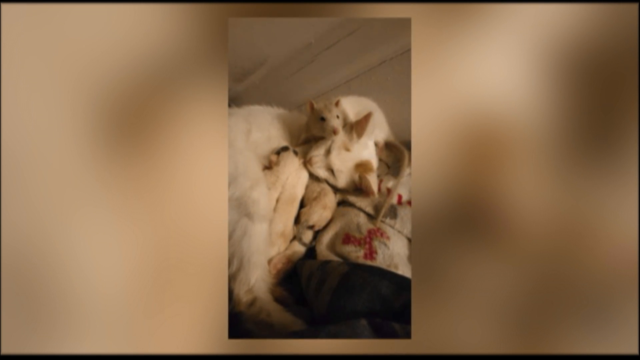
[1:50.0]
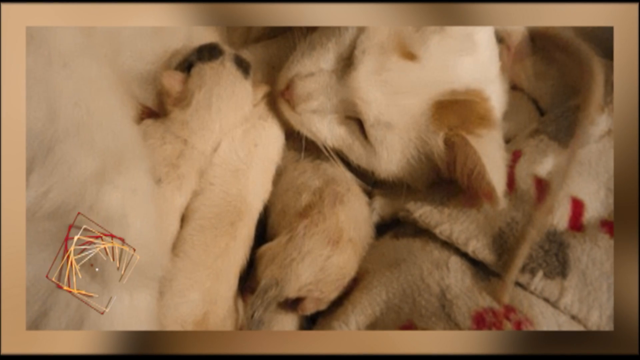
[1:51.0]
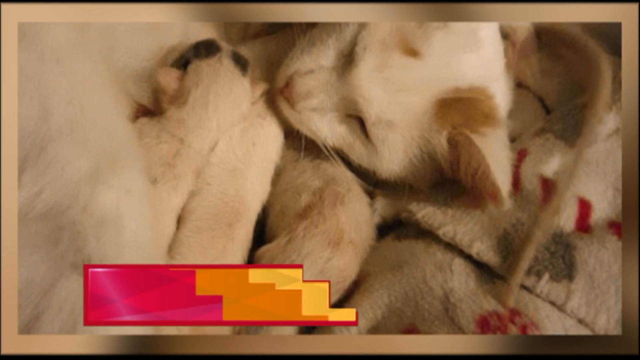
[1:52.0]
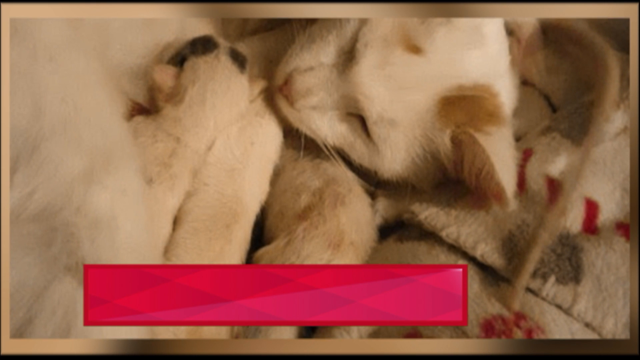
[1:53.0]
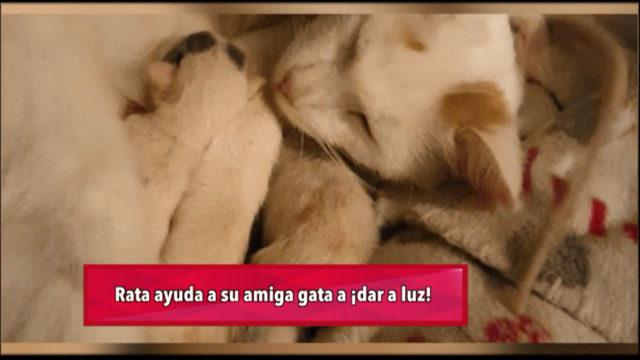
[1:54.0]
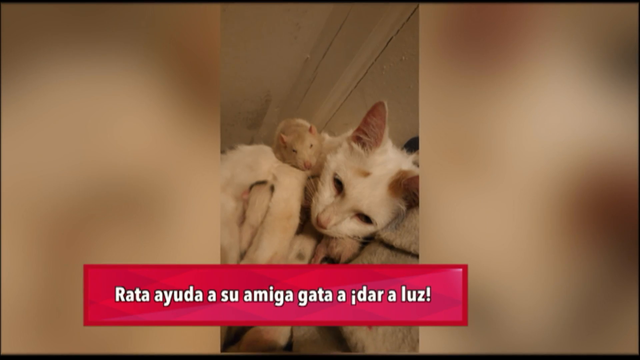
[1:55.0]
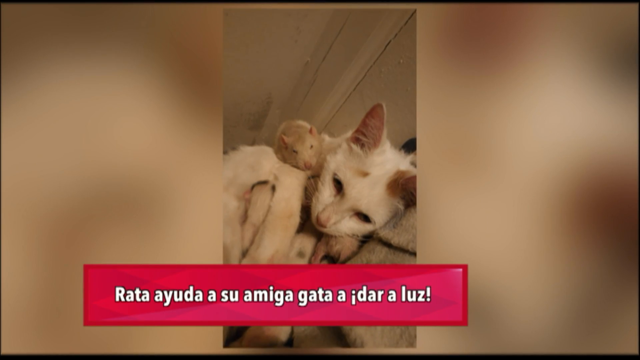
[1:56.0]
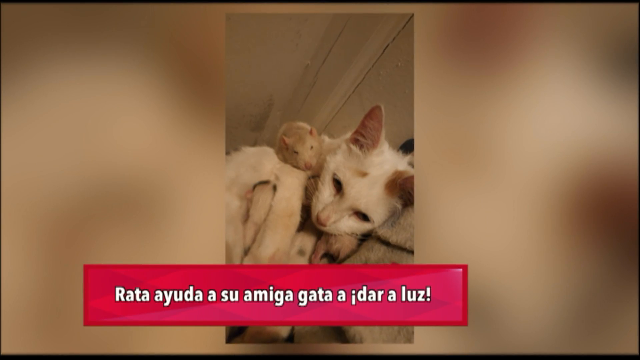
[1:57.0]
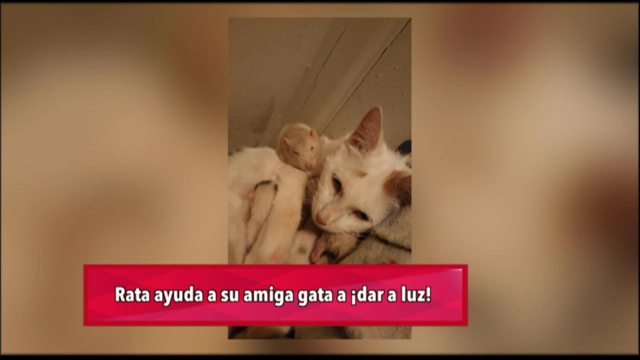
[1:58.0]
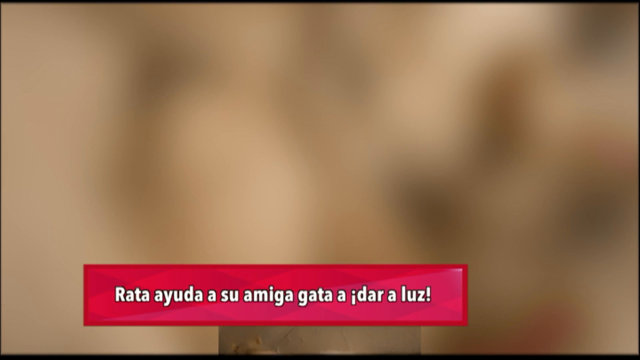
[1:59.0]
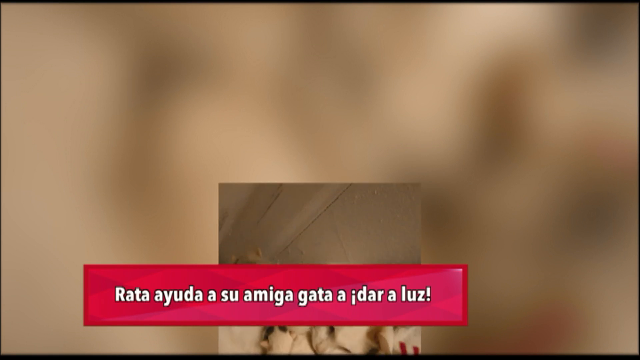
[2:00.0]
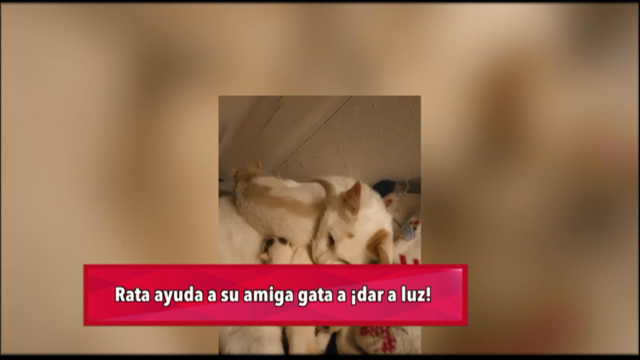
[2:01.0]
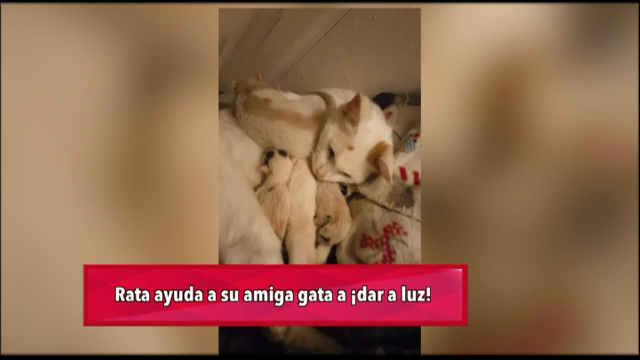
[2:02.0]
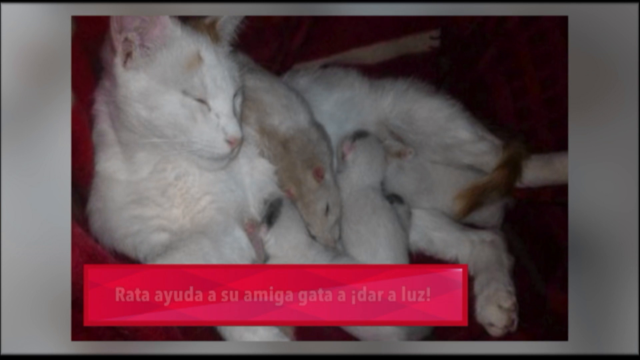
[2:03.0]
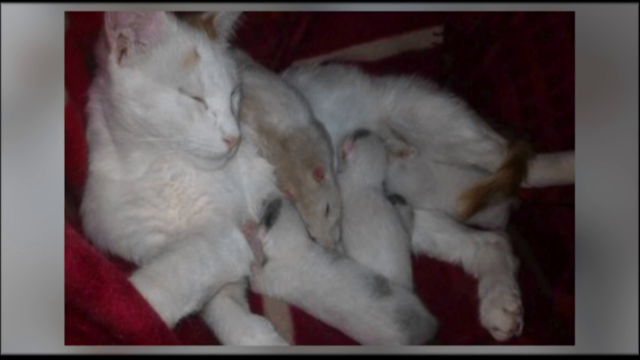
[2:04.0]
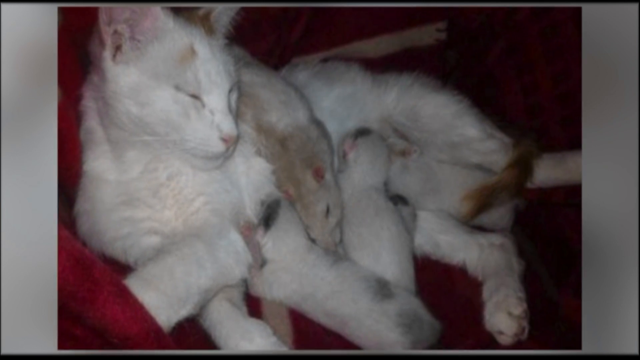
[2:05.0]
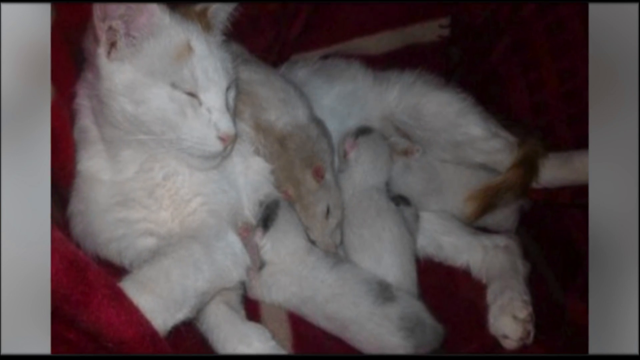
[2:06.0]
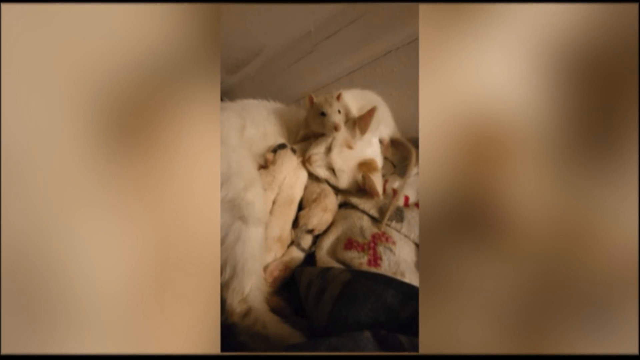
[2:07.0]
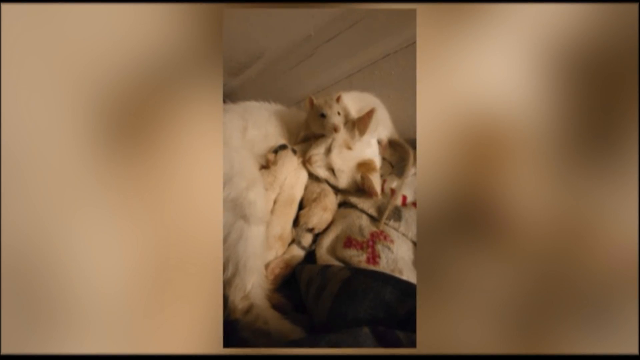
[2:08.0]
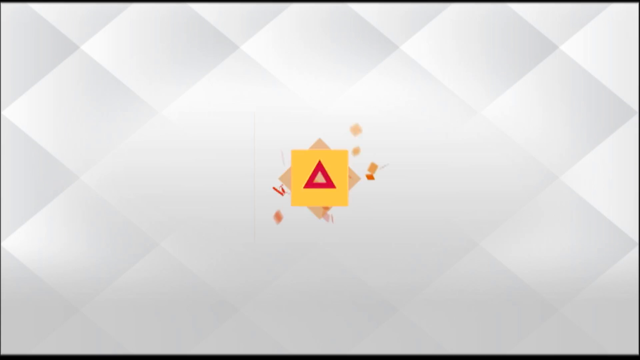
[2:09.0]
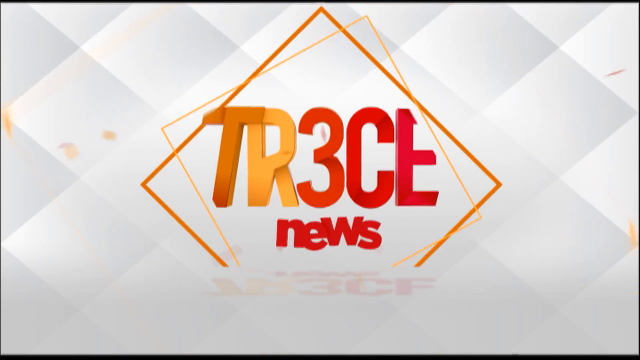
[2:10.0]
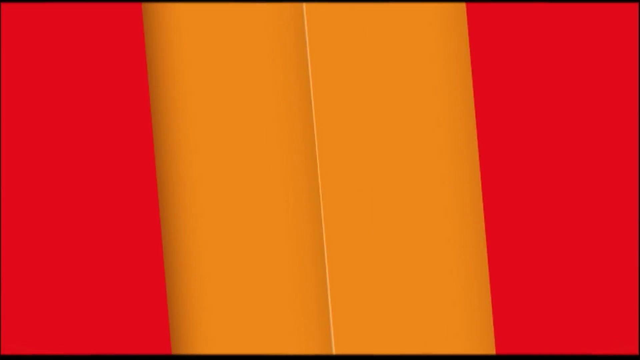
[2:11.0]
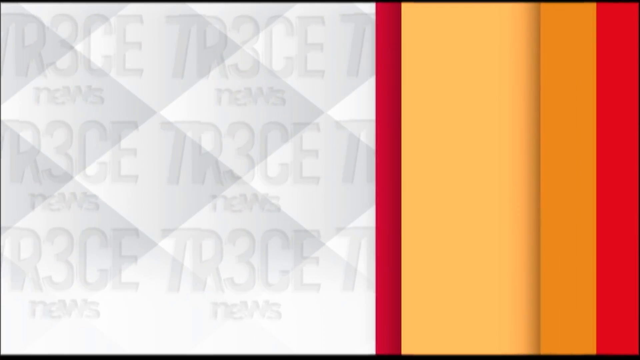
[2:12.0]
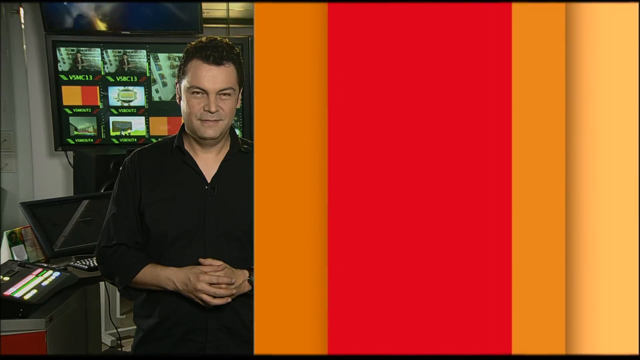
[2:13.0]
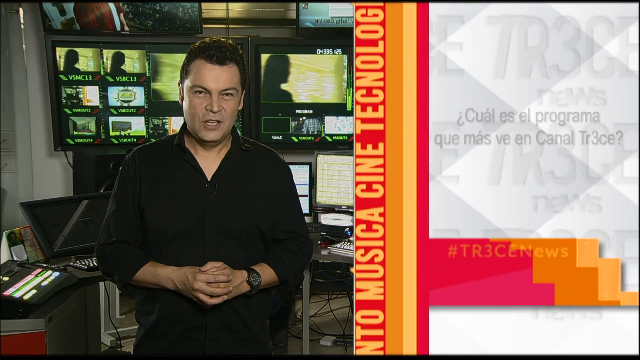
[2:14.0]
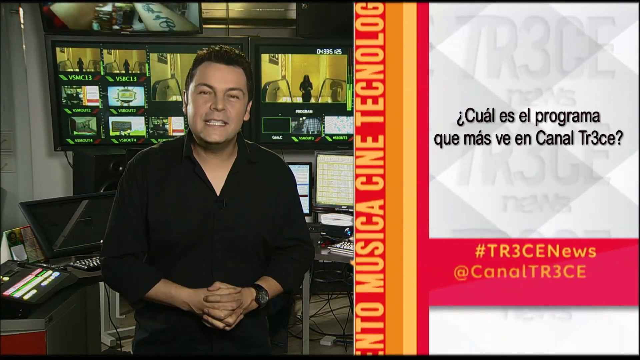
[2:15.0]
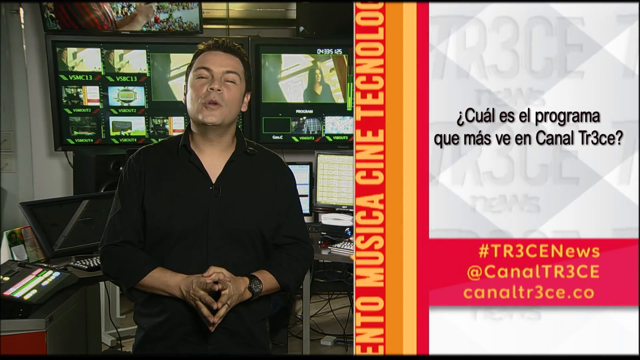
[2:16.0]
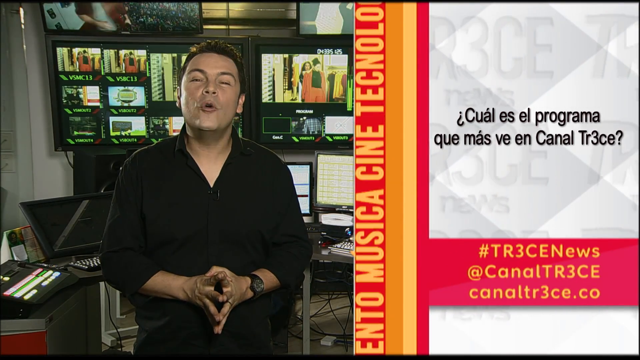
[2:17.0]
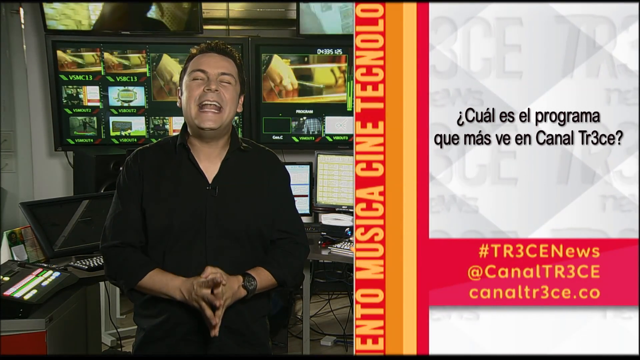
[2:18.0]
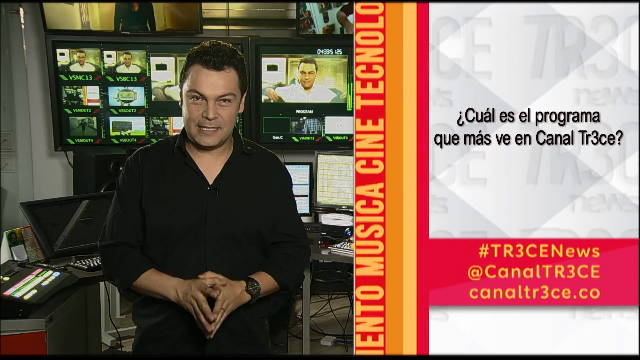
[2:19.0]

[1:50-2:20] Two cats are sleeping with their eyes closed; they have short ears covered in white fur, and their paws are visible. On the other side is a red ribbon, which continues to play. Then a cat is shown with open eyes, with a rat on top of it looking at the camera; the cat is also looking at the camera, and both seem perplexed. Below them is a label in a foreign language reading "rataayudasuamigagataaidaraluz?!". The view zooms out, and another screen appears showing white cats sleeping together with kittens, enjoying themselves and playing.